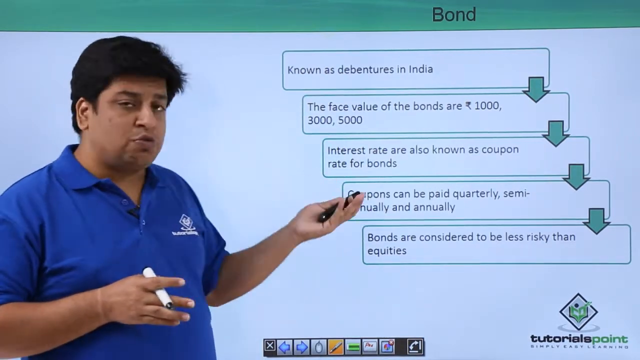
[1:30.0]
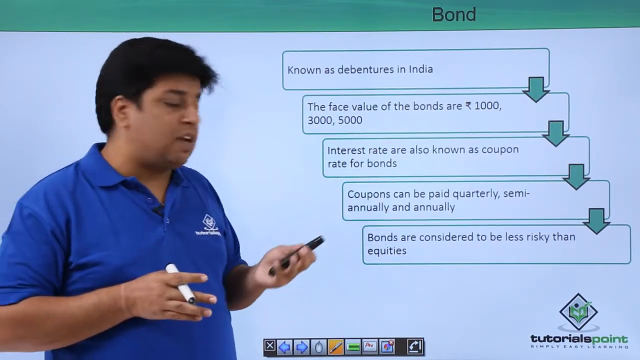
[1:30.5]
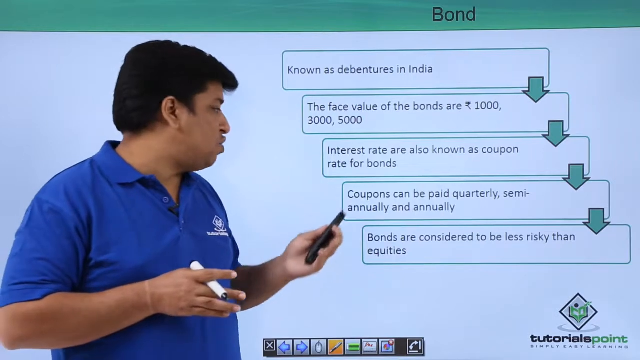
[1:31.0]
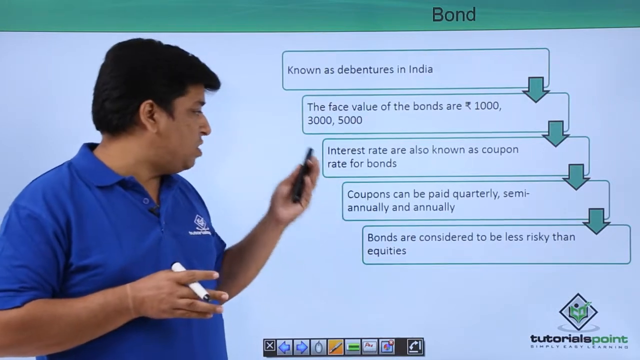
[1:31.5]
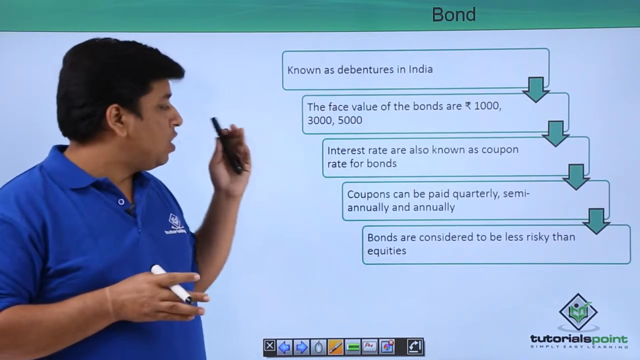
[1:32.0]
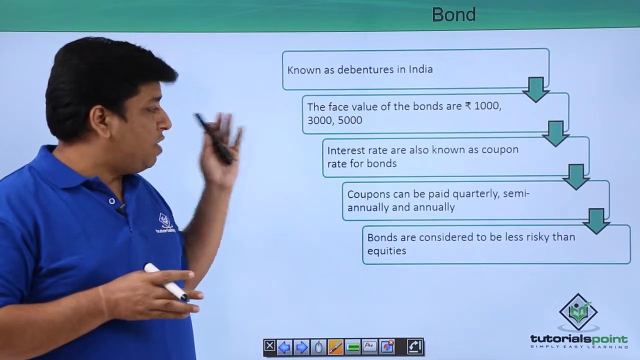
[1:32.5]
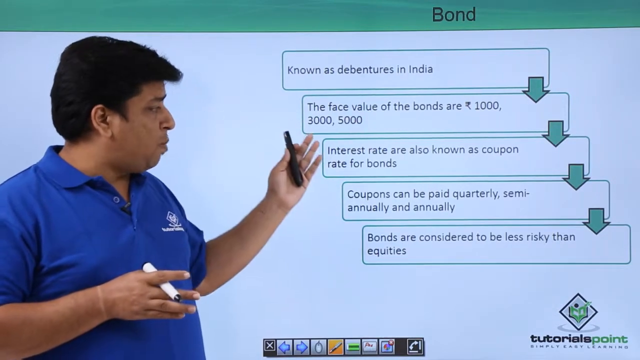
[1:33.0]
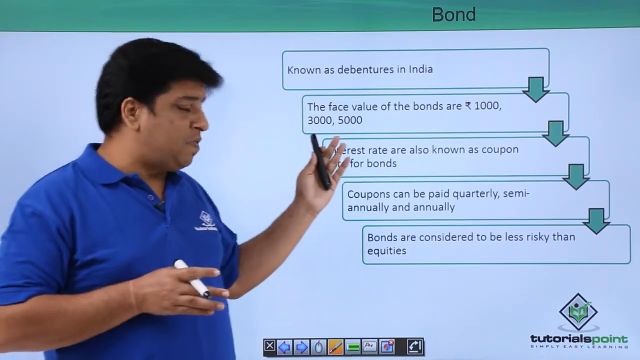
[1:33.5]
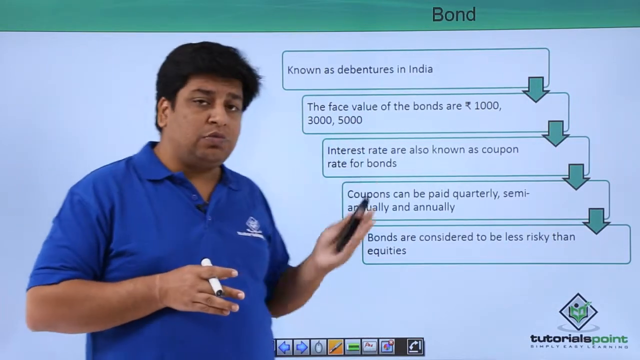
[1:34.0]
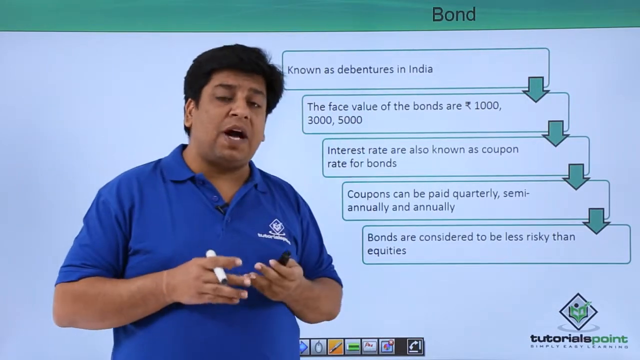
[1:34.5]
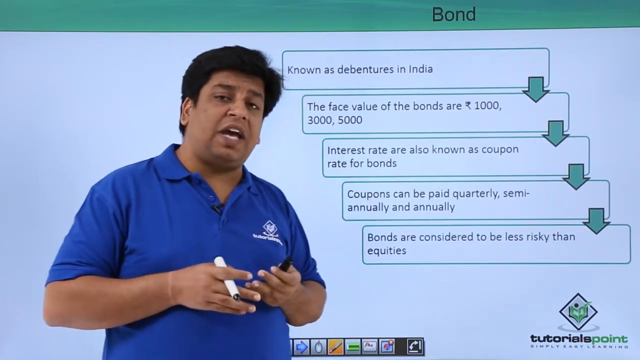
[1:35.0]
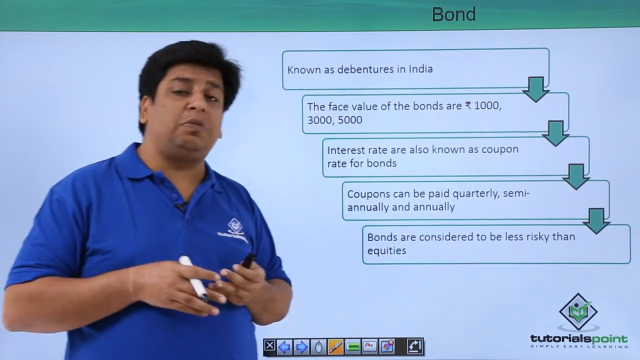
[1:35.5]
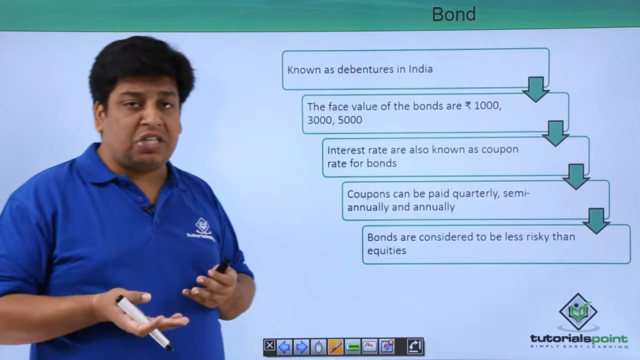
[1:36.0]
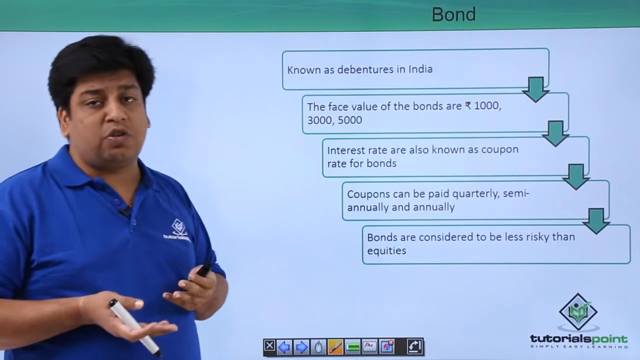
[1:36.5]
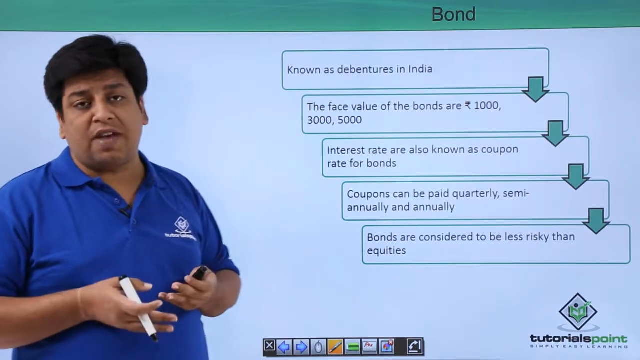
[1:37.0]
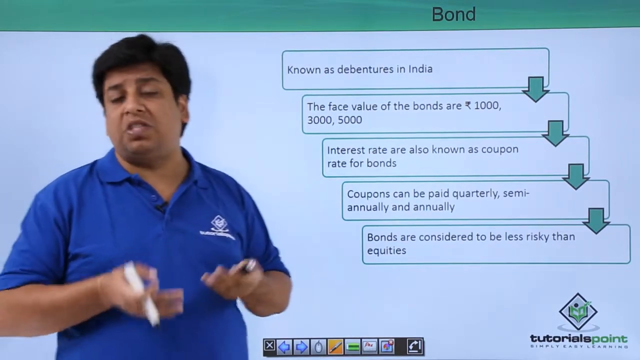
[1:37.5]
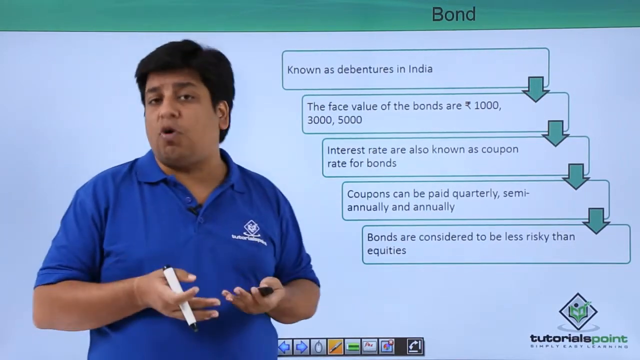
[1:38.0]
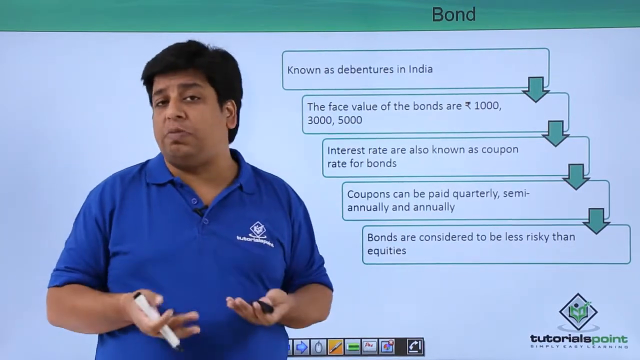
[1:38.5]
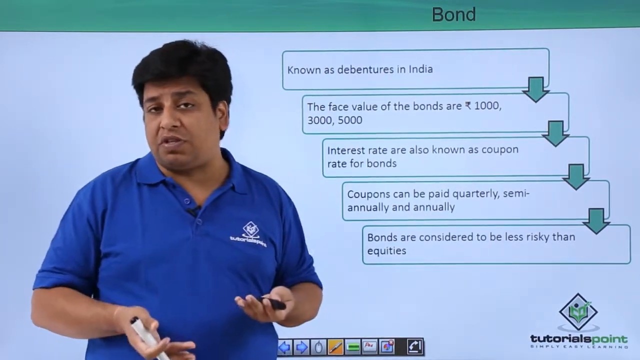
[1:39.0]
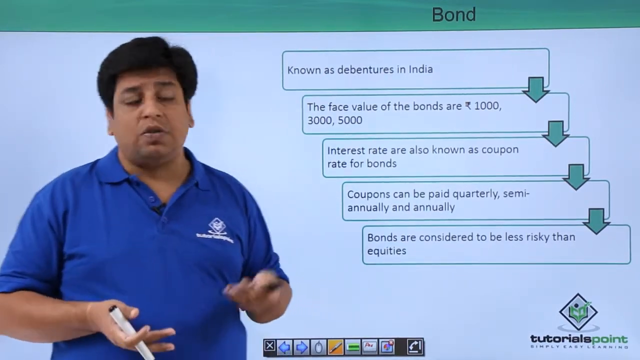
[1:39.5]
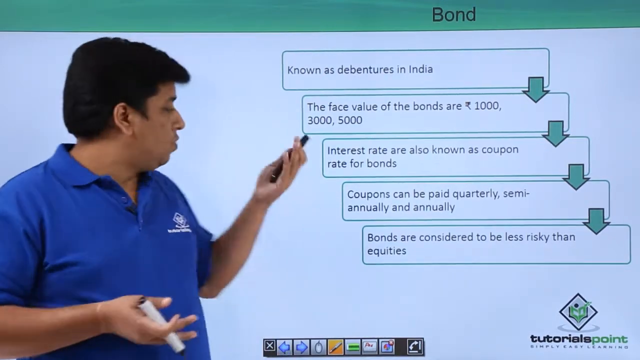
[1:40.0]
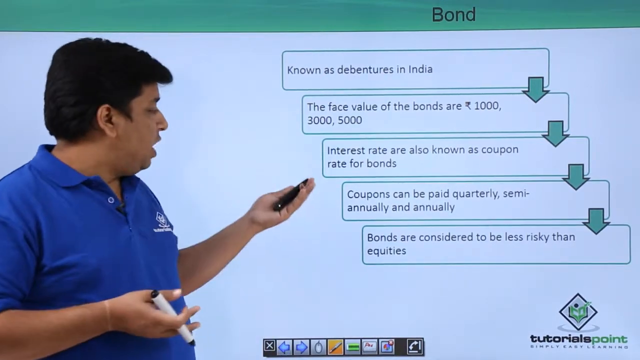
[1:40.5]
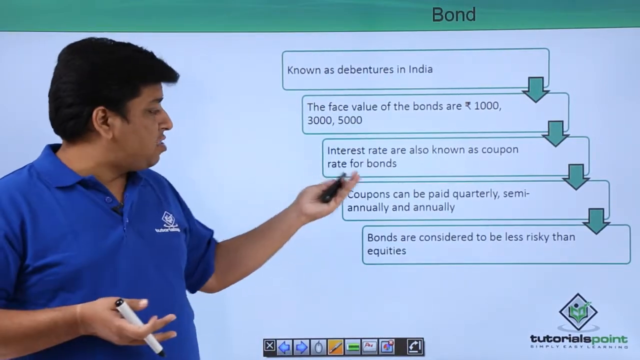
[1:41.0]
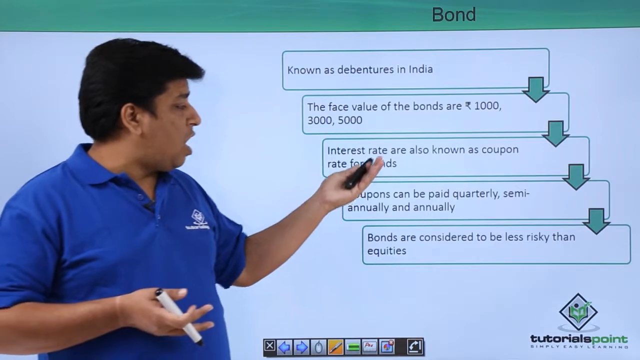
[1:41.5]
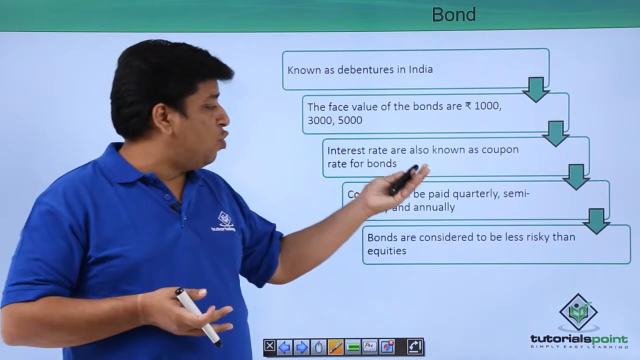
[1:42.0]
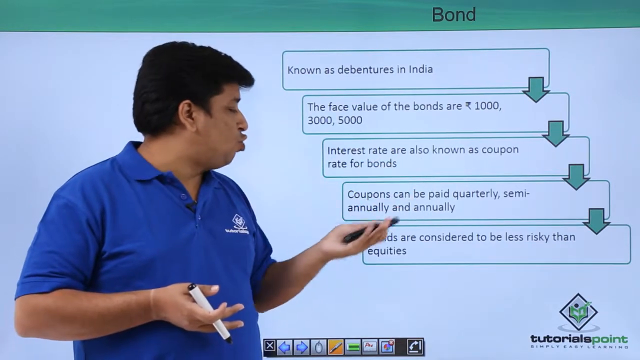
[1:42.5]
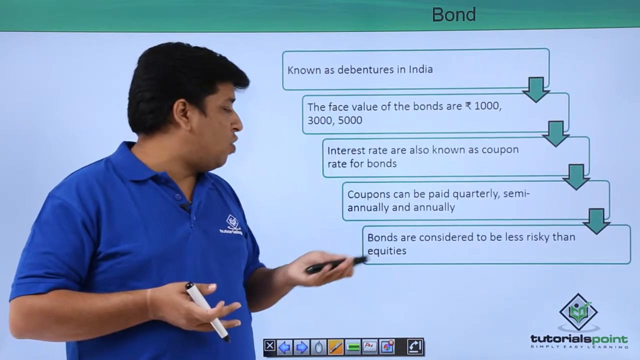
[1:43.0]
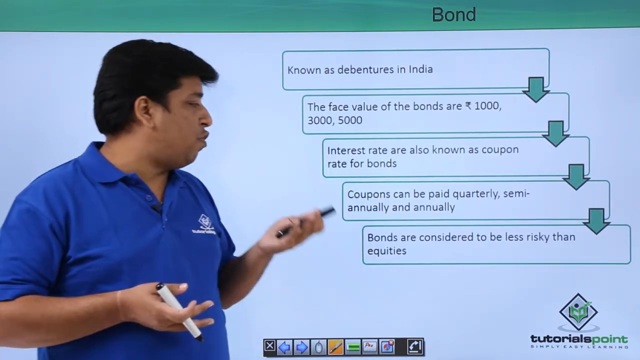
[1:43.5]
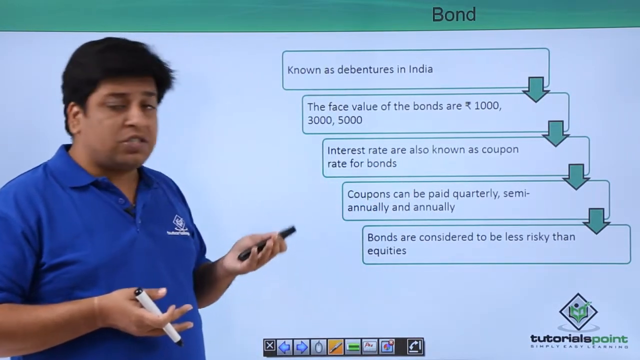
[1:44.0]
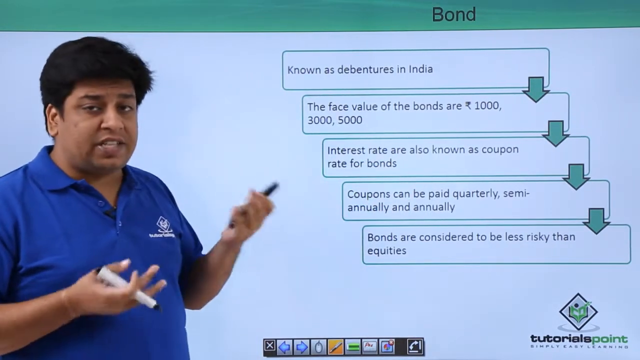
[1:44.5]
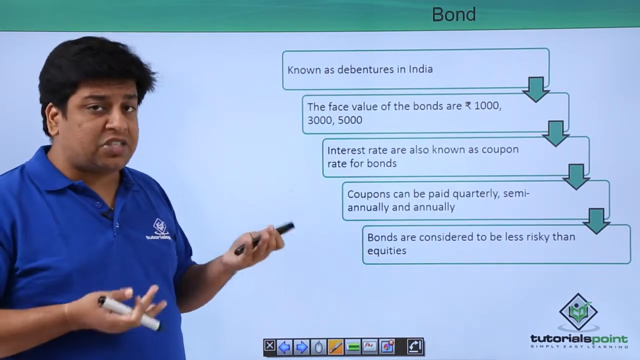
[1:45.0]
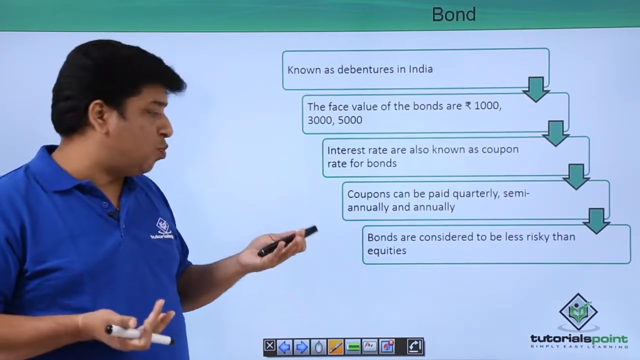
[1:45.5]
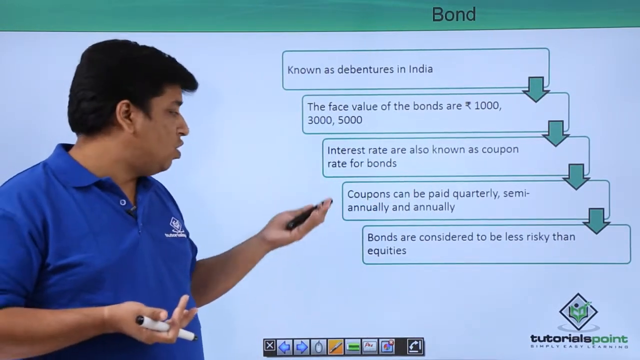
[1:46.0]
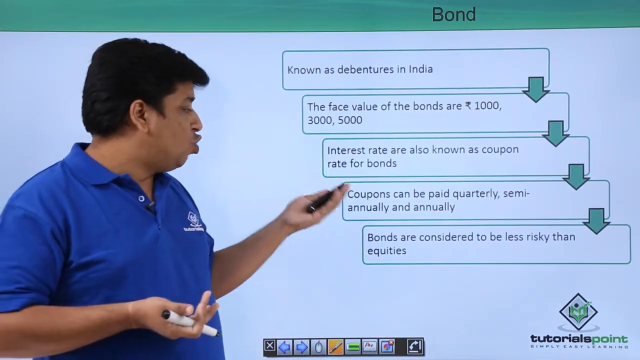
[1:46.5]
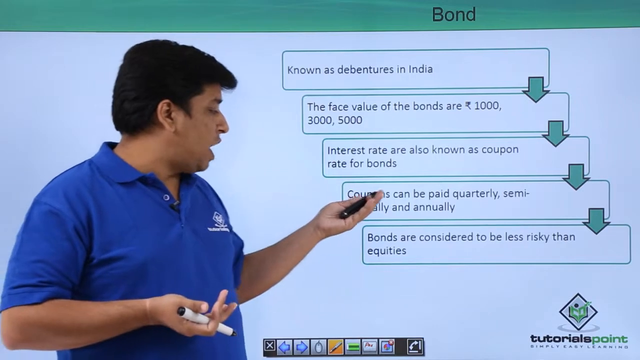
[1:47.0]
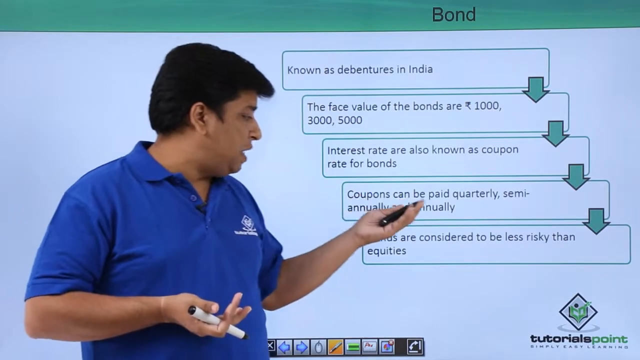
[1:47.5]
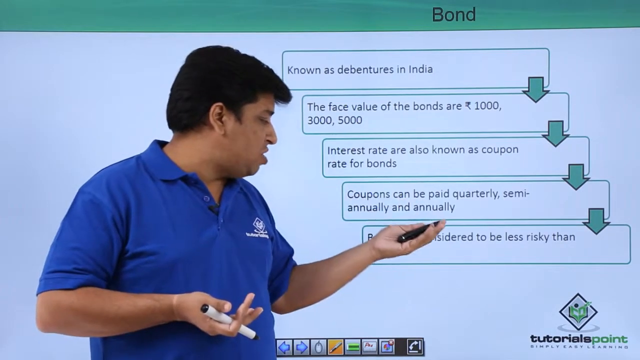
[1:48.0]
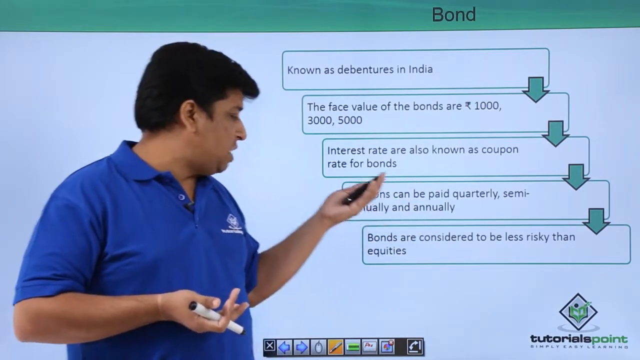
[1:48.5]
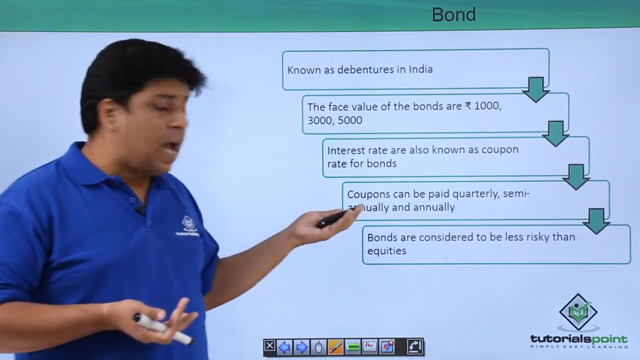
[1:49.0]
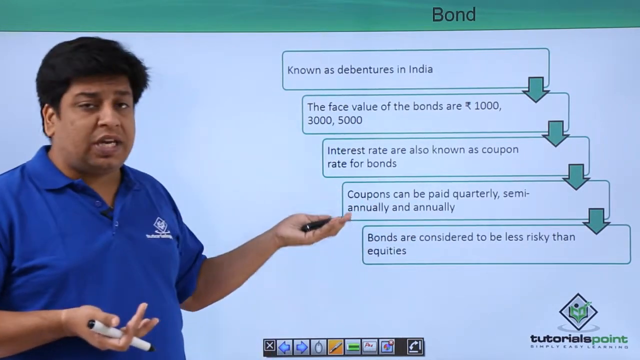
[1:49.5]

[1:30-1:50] The Indian man on the left side of the screen wears a blue polo with the company logo on the left breast. He holds a marker in his right hand and a laser pointer or slide clicker in his left hand, and has long, poofy black hair. He looks at a slide with more information about bonds: kind of rectangles containing text, each with an arrow pointing down to the next rectangle. The rectangles read "known as debentures in India", "the face value of the bonds are 1,000 rupees, 3,000, 5,000", "interest rates are also known as coupon rate for bonds", "coupons can be paid quarterly, semi-annually and annually" and "bonds are considered to be less risky than equities". The Tutorials Point logo is in the bottom right-hand corner of the screen. The man talks about the points on the screen.